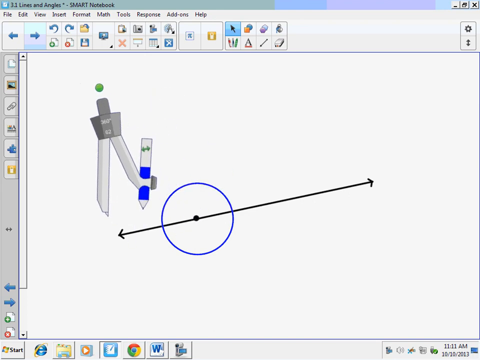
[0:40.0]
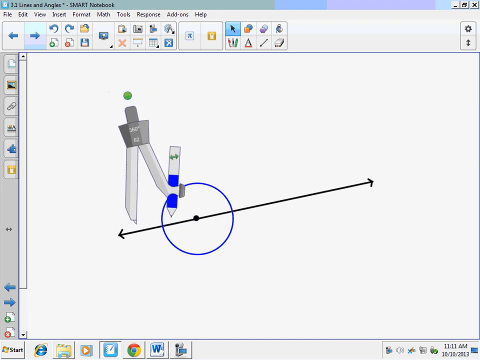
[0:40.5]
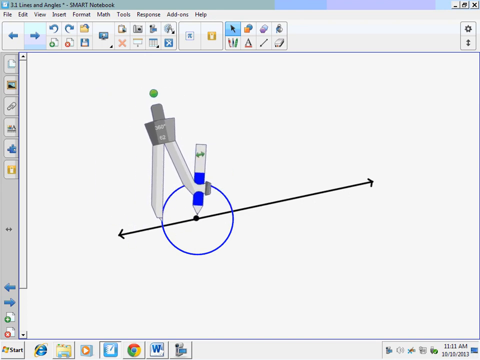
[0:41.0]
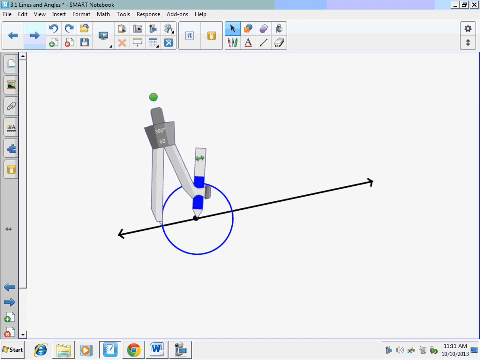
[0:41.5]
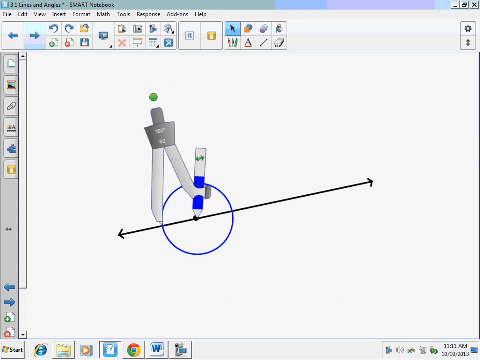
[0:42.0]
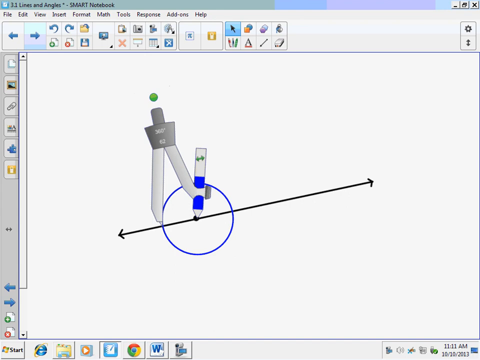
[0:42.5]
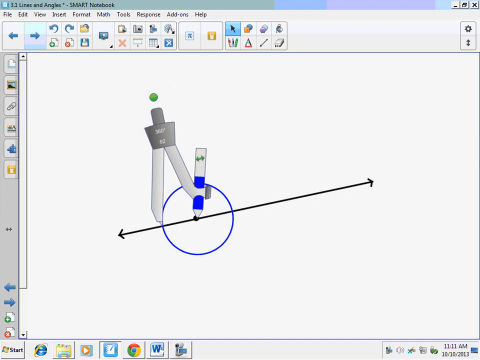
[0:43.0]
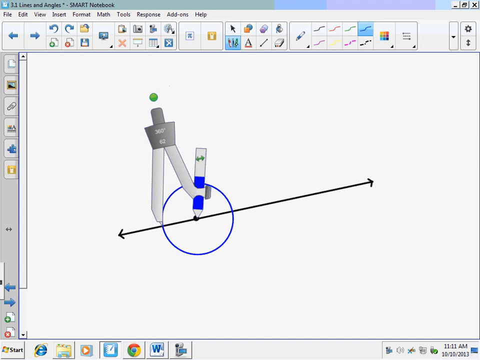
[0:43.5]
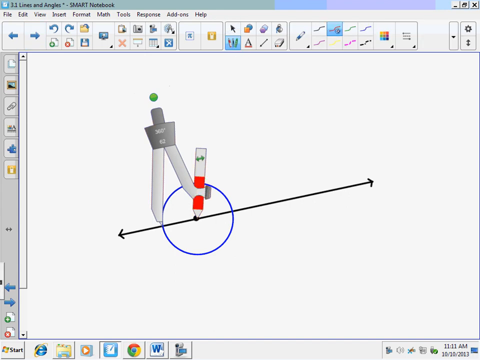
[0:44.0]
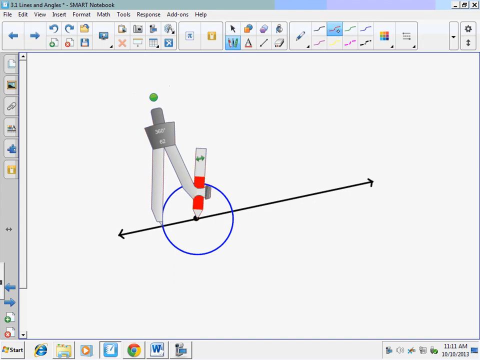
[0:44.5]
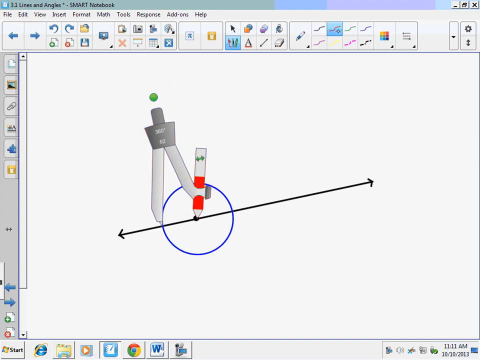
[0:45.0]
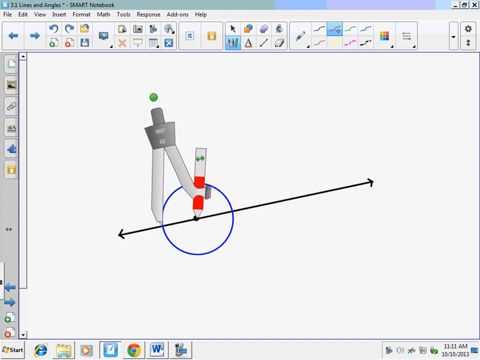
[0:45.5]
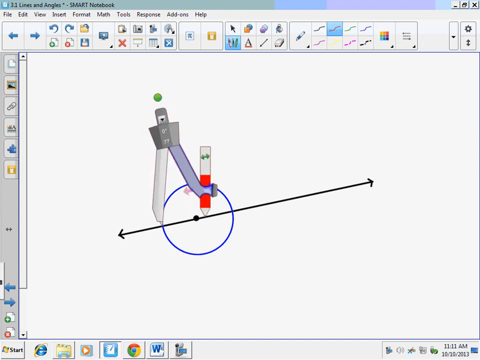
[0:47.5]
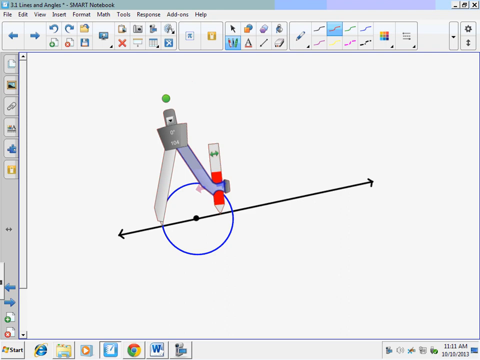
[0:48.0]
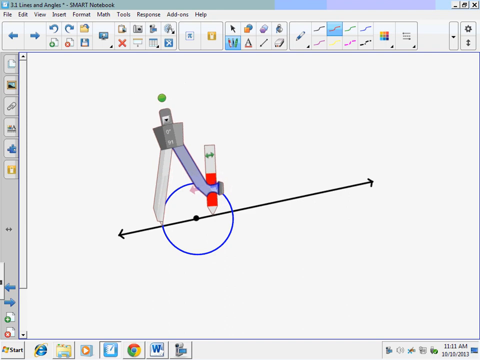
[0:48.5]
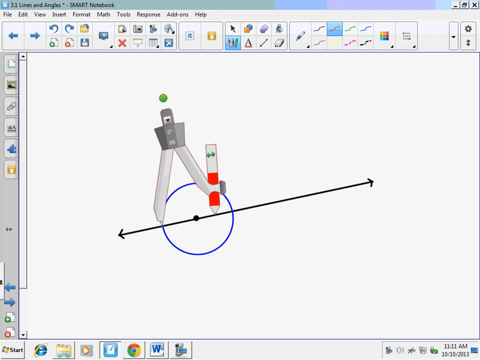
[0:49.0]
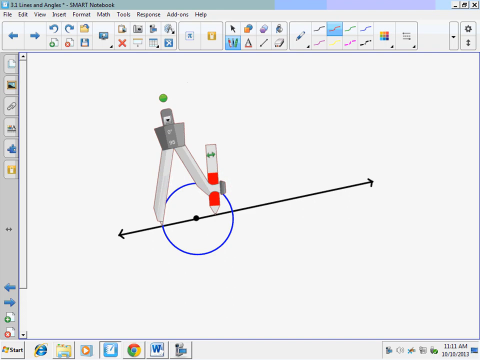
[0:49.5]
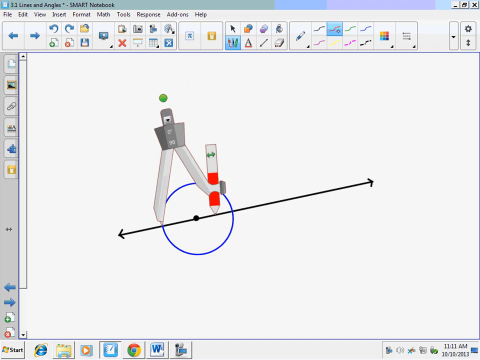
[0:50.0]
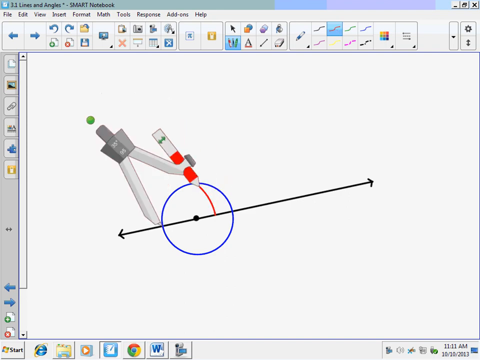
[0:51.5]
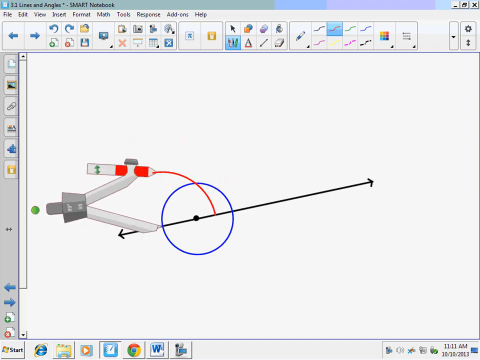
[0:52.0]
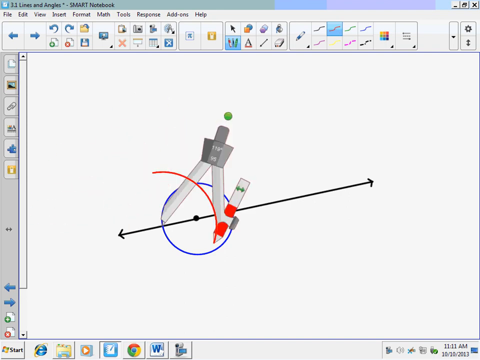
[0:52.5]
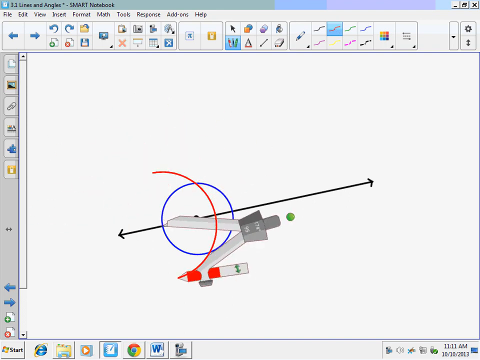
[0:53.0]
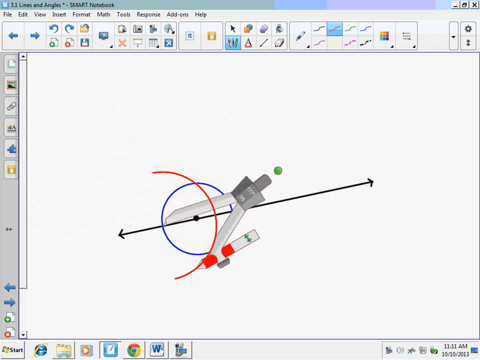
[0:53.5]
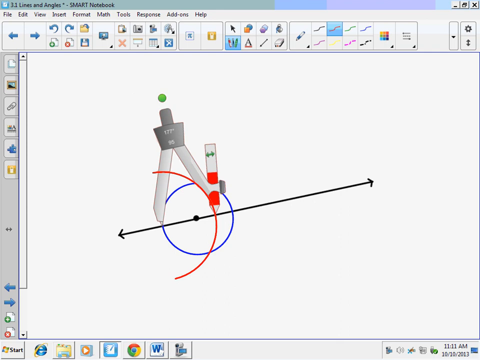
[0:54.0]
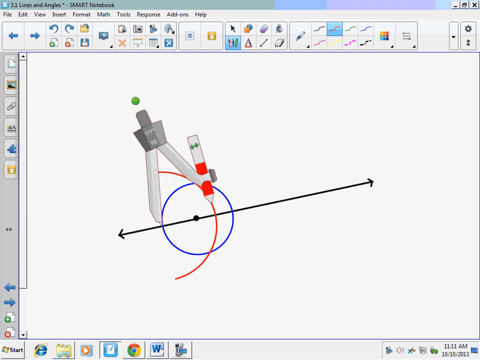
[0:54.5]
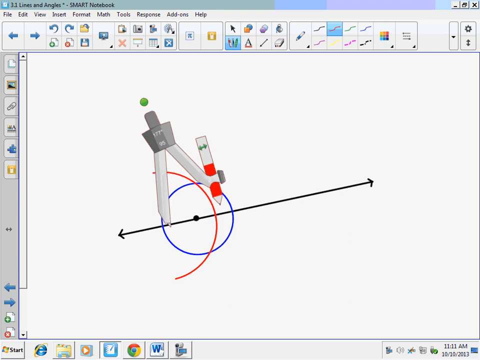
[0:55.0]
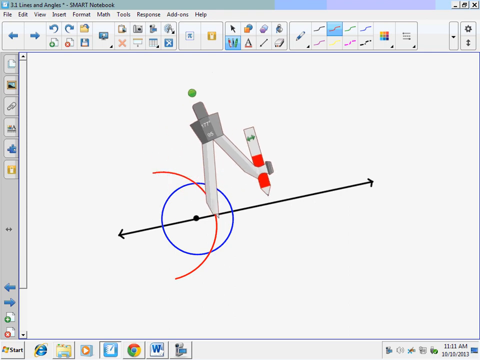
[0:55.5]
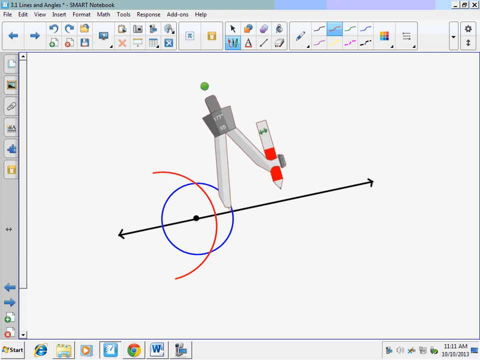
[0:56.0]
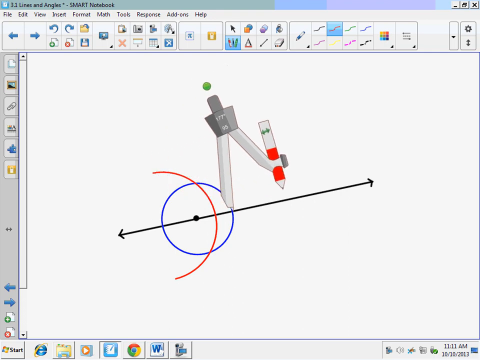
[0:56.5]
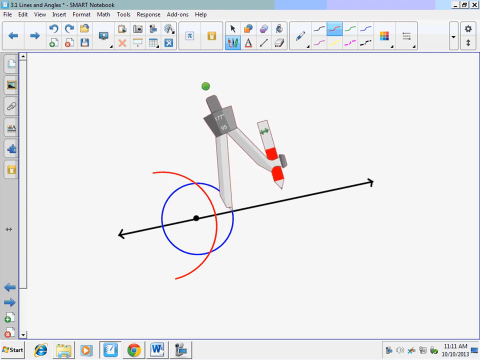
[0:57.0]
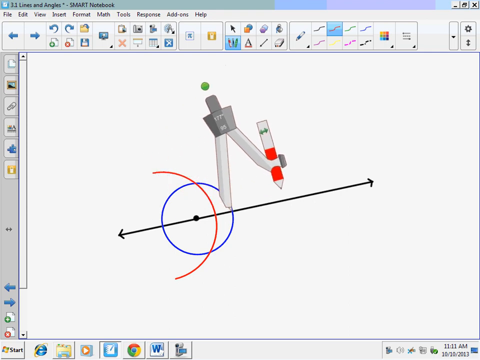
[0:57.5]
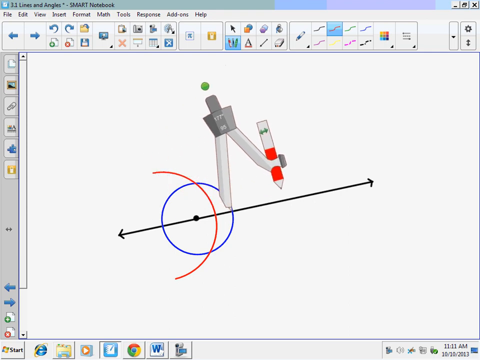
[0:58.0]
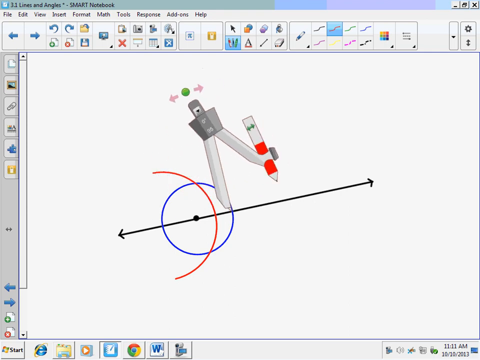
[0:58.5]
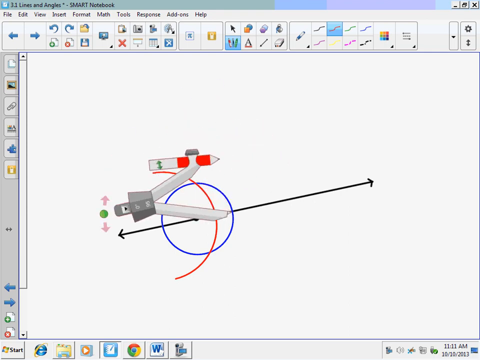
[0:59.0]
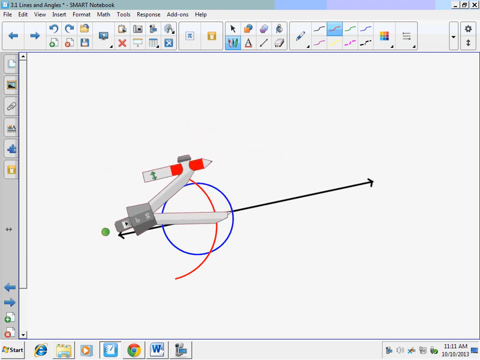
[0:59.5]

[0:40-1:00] In a screen recording of a program titled "3.3 Lines at Angle Smart Notebook," the white workspace has a line running from the bottom left corner to the top right corner, with a point toward the left side of the line. A blue circle is drawn around the point. The user is using a cartoon-graphic-looking compass tool with a pointer down on one side and a marker on the other. They change the marker to a red marker and point it toward the point on the circle, put the pointed end of the compass on one side of the circle, and extend the red marker halfway between the side of the circle and the point. They then draw a semicircle line up and down, and do the same thing for the other side.